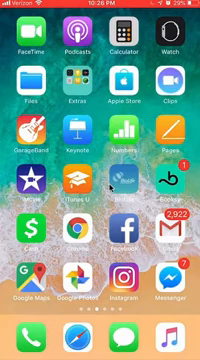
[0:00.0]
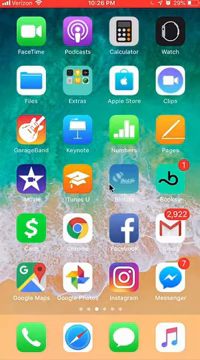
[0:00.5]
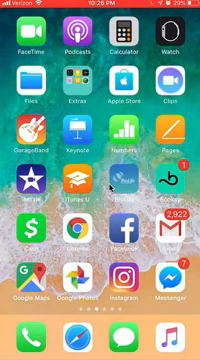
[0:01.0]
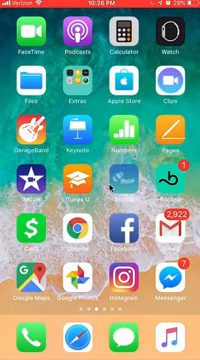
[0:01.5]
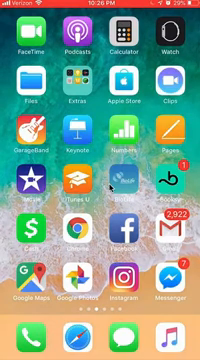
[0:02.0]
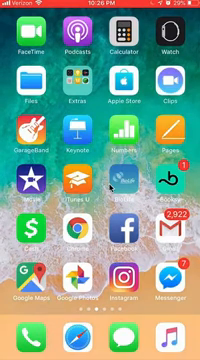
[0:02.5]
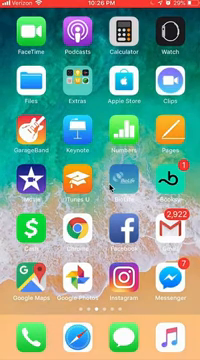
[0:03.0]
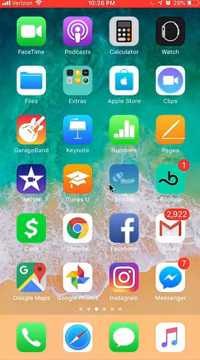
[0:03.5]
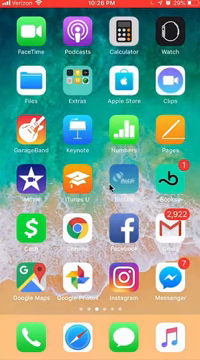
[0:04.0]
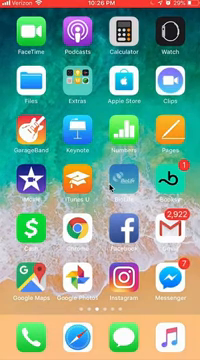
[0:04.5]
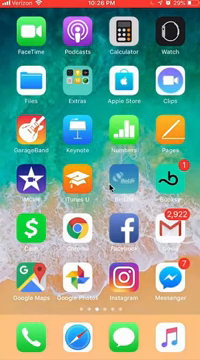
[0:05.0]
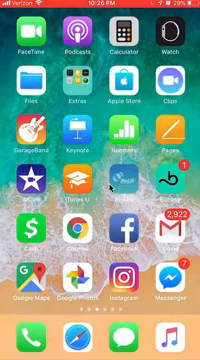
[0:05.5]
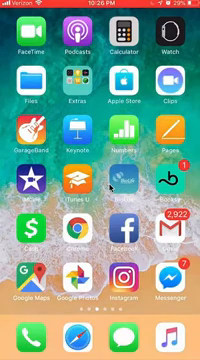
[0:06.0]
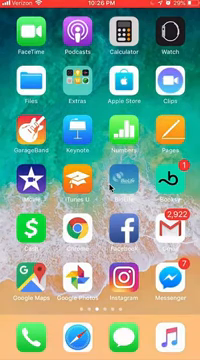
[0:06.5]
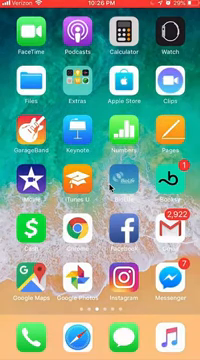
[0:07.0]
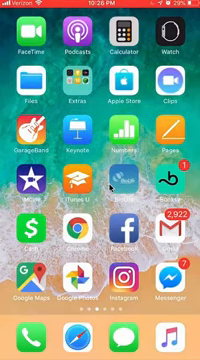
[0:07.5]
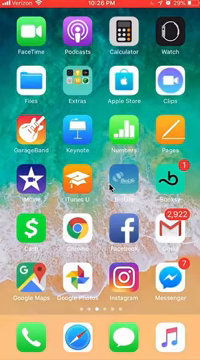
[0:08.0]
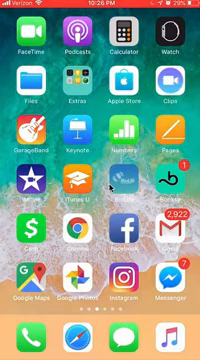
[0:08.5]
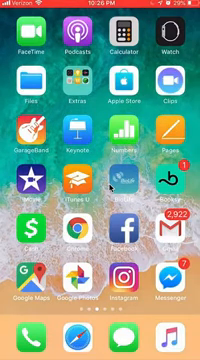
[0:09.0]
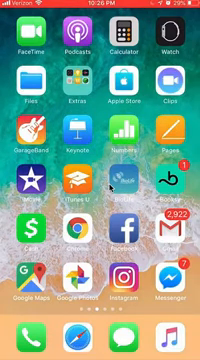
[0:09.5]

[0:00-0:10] An iPhone home screen is shown. Among the apps are FaceTime, podcast, calculator, the watch, GarageBand, Keynote, Pages, iTunes, Google, Facebook, Gmail with 2,992 emails, Chrome, Instagram, Google Maps, messages and Apple Music. The apps are different colors. The background wallpaper shows Oceania, with part of the world in blue. A messenger app shows seven messages.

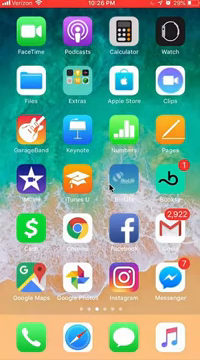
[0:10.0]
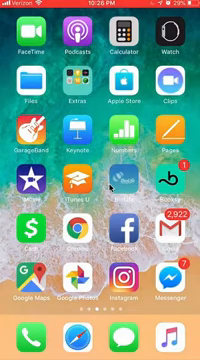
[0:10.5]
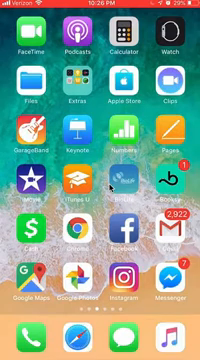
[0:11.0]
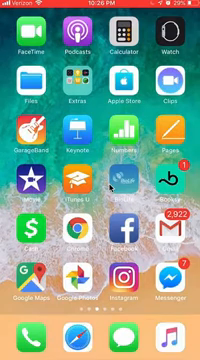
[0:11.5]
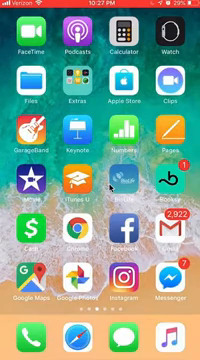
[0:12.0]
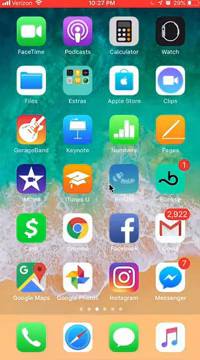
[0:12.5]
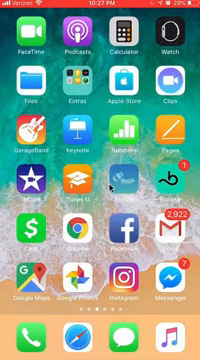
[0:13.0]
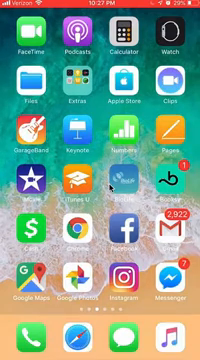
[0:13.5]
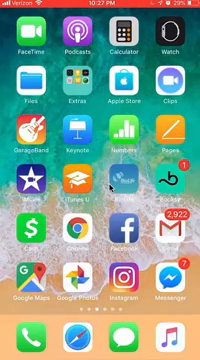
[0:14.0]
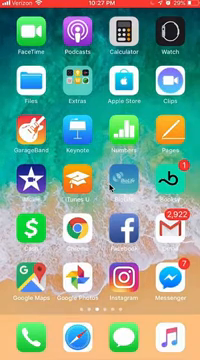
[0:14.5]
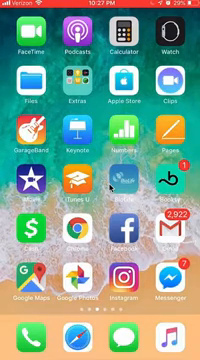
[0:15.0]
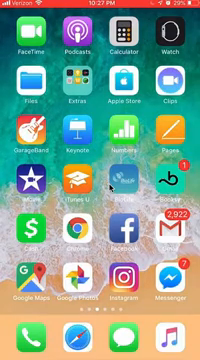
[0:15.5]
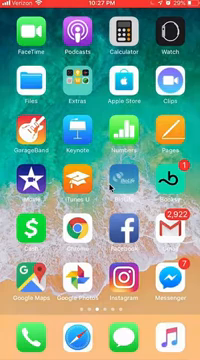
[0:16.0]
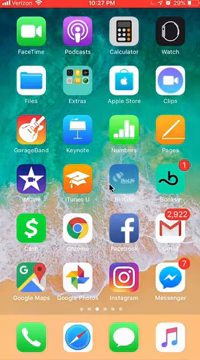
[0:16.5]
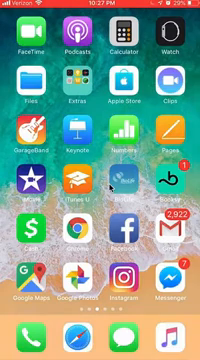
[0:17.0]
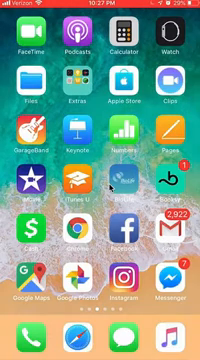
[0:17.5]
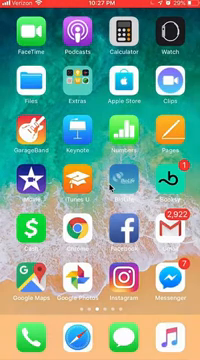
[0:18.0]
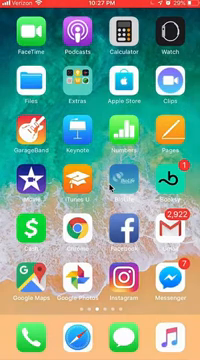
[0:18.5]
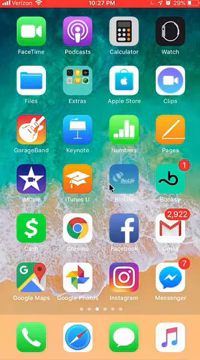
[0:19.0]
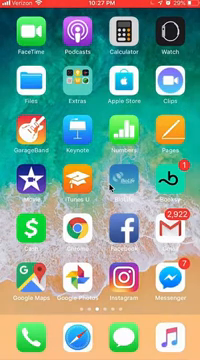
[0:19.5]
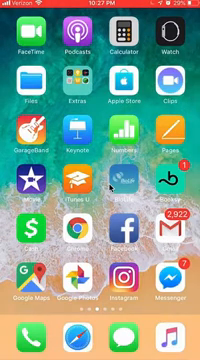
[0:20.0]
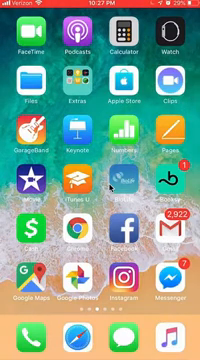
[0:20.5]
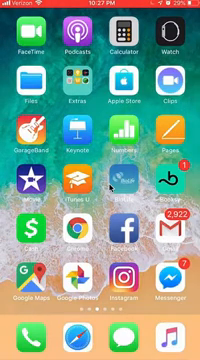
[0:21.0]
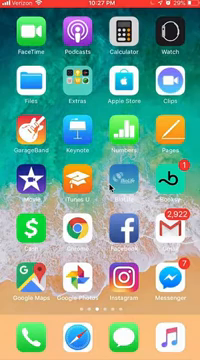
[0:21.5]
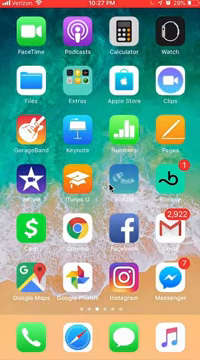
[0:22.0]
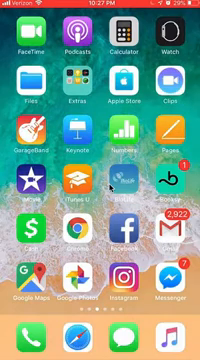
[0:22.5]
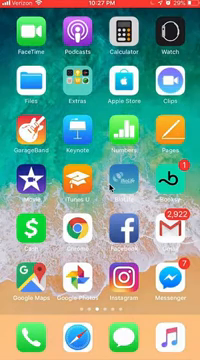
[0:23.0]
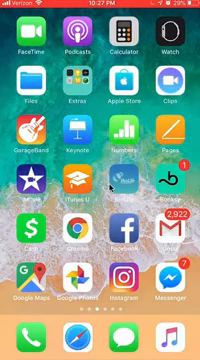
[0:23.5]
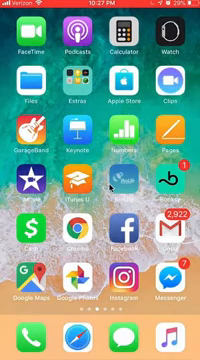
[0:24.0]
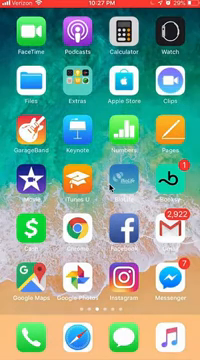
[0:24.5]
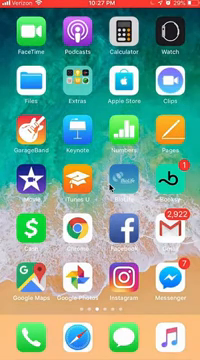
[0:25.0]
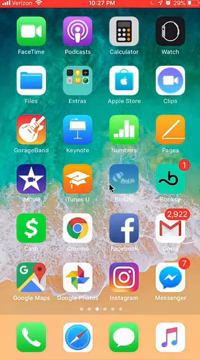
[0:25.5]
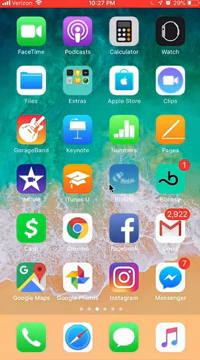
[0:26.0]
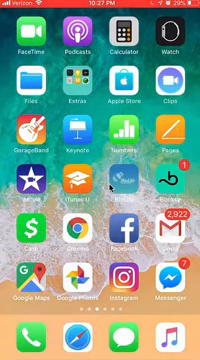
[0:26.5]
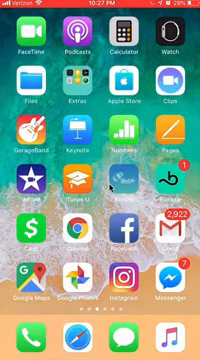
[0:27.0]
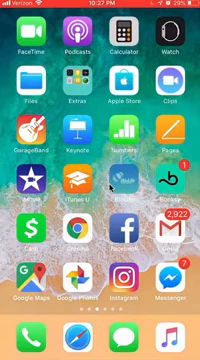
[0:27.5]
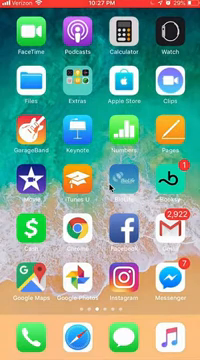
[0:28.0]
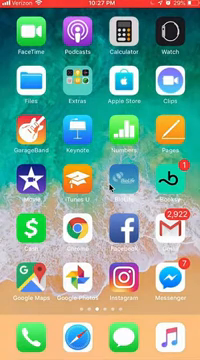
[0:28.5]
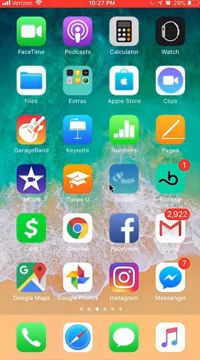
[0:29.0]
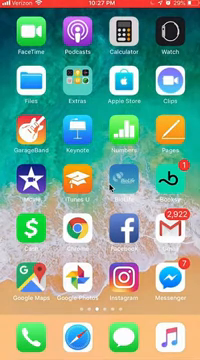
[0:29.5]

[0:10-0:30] The home screen with all the apps is still shown, with the same number of messages and the same apps; FaceTime, podcast, files and GarageBand are visible, along with the Apple Watch, clips and music apps. The time shows 10:26 p.m., and the phone's network connection is visible at the top. The wallpaper is blue with a bit of a brownish tint, and Apple Music is on the other side of the screen.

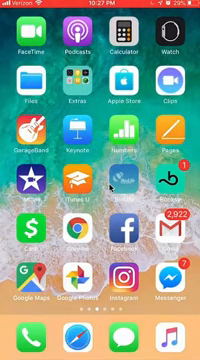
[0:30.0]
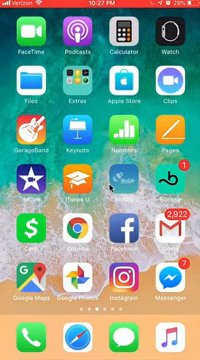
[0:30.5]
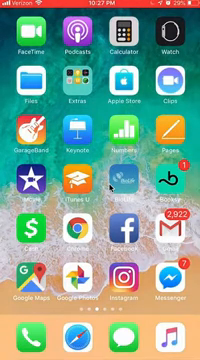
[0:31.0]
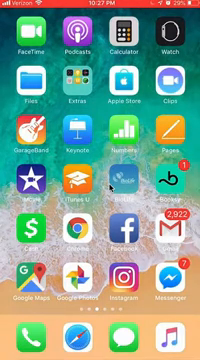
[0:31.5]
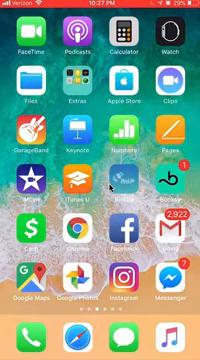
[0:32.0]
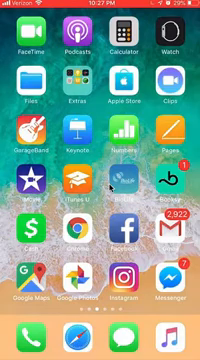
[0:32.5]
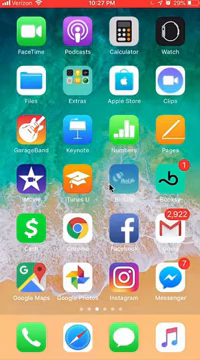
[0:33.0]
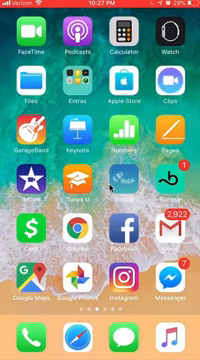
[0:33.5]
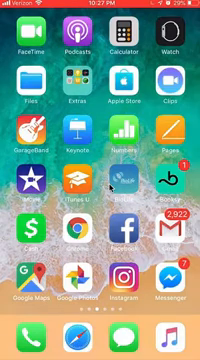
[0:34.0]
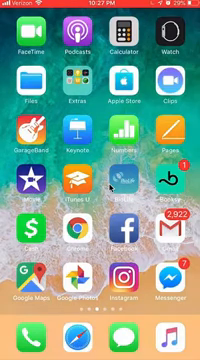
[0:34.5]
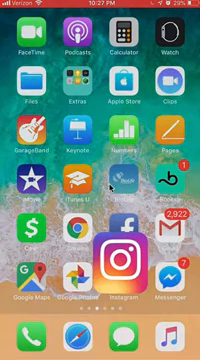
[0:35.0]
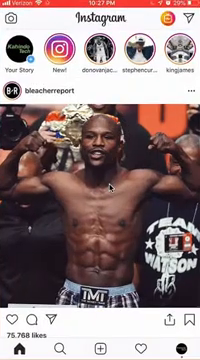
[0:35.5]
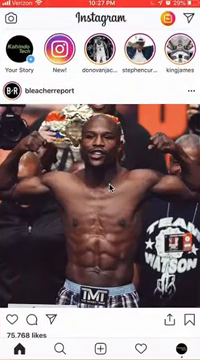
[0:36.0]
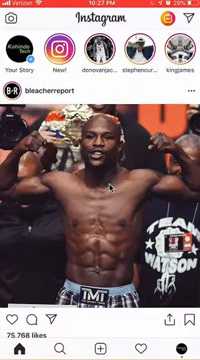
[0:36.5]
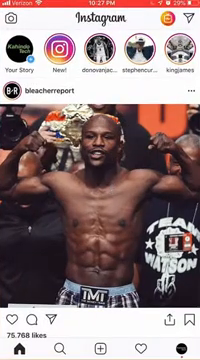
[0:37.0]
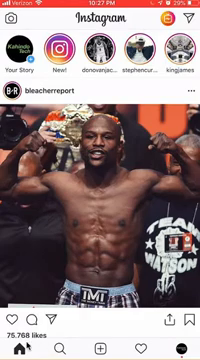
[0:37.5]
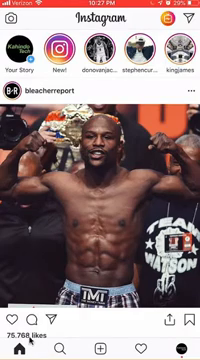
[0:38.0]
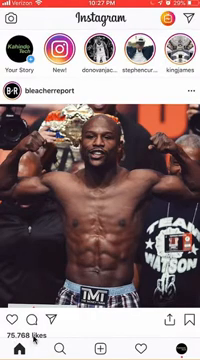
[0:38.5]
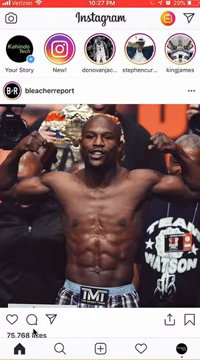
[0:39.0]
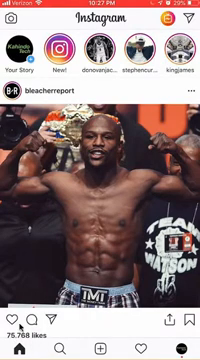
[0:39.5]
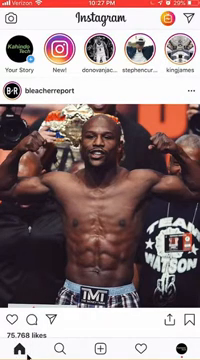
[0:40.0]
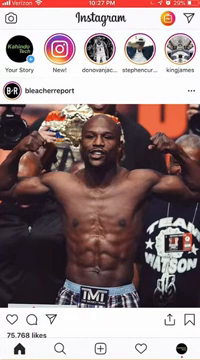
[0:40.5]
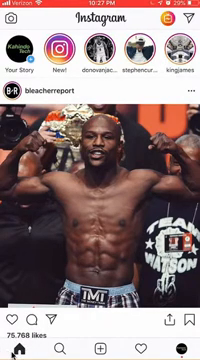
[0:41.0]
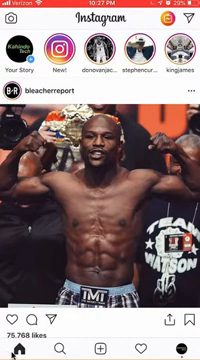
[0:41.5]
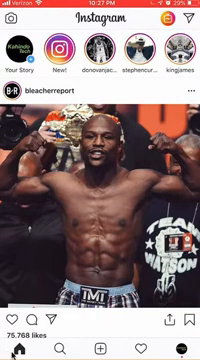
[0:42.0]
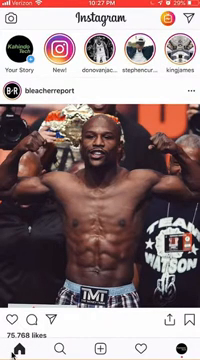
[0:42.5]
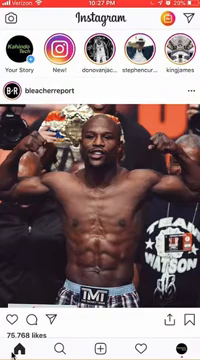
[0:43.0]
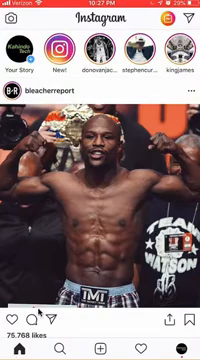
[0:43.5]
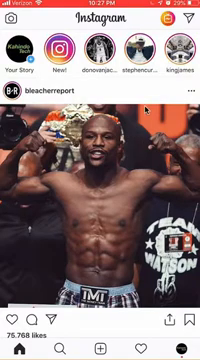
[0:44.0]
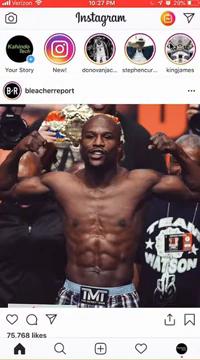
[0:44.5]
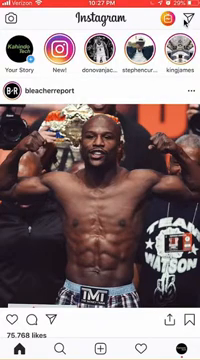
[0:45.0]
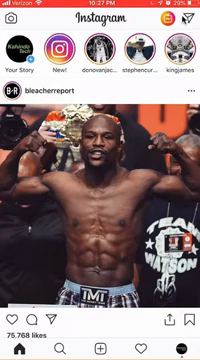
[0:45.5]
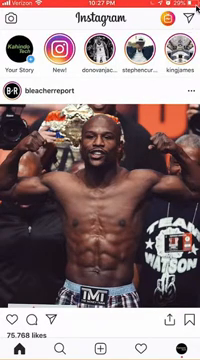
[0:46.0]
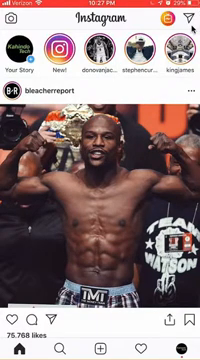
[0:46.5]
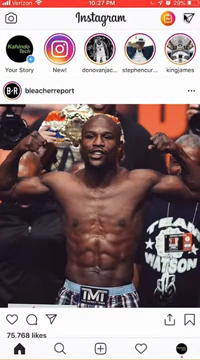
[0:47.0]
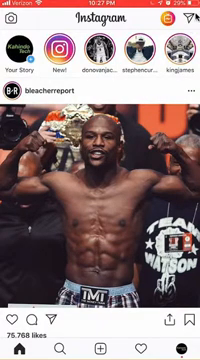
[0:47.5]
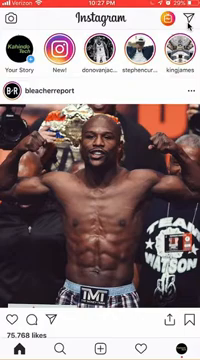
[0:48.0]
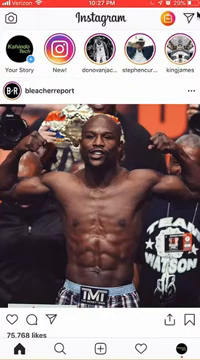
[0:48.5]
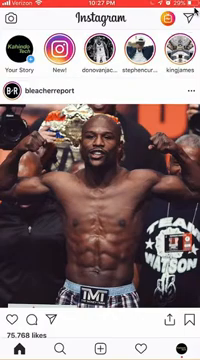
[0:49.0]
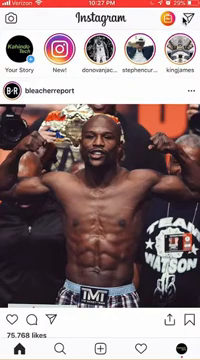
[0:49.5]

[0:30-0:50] The user opens Instagram, where a picture shows a young Black man. The cursor moves around the home page, and the post has about 75,768 likes. The man is smiling and looks like he just won something, and a few Black people are behind him. The user goes back to the iPhone home screen, which shows the same apps, then the cursor moves back to the posting button before returning to the home screen again. The battery shows 29%.